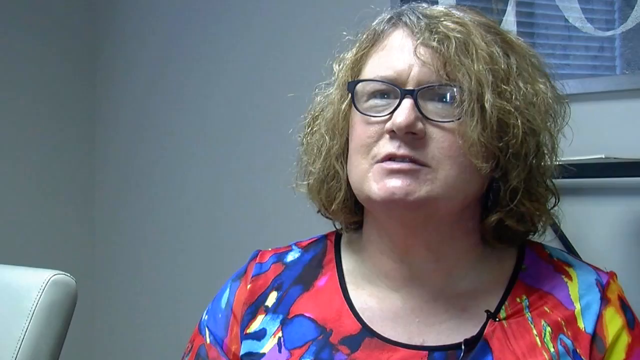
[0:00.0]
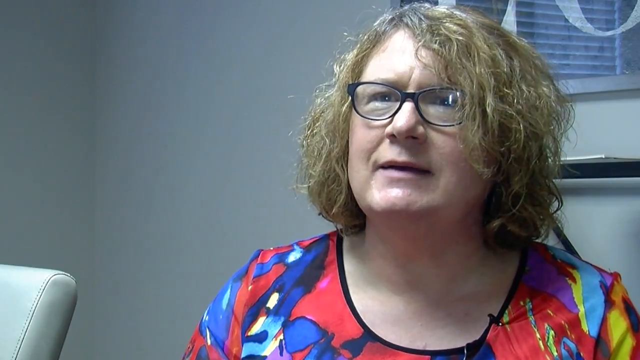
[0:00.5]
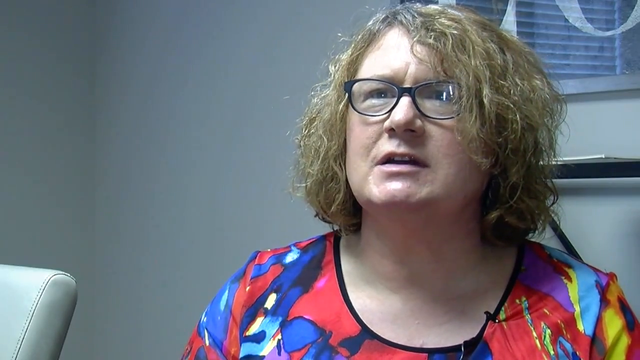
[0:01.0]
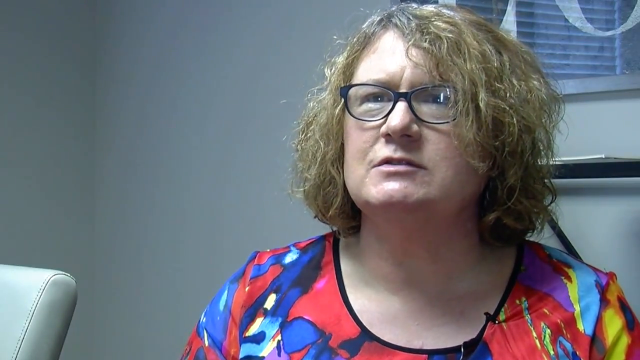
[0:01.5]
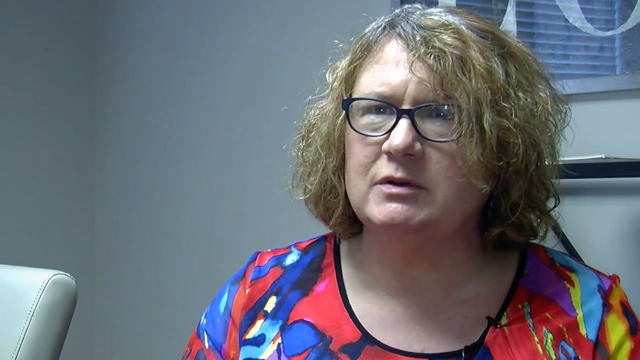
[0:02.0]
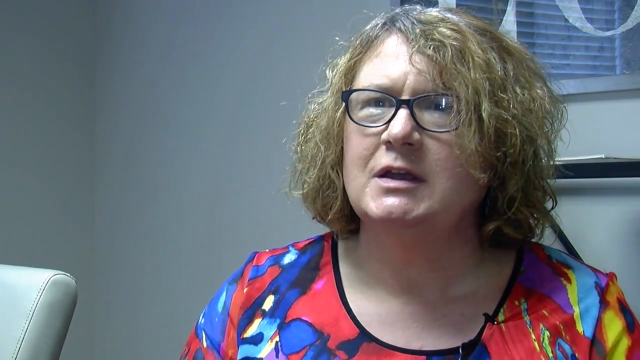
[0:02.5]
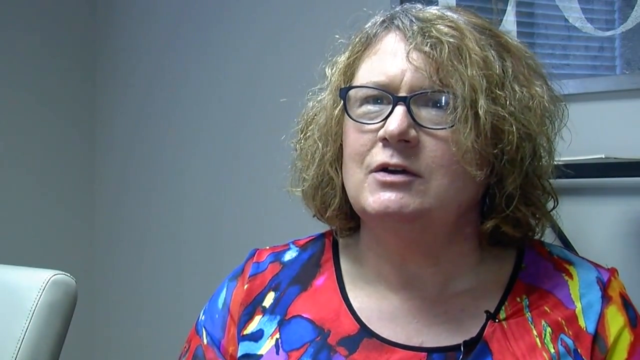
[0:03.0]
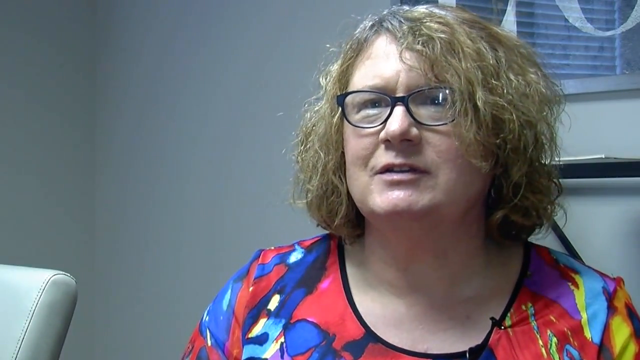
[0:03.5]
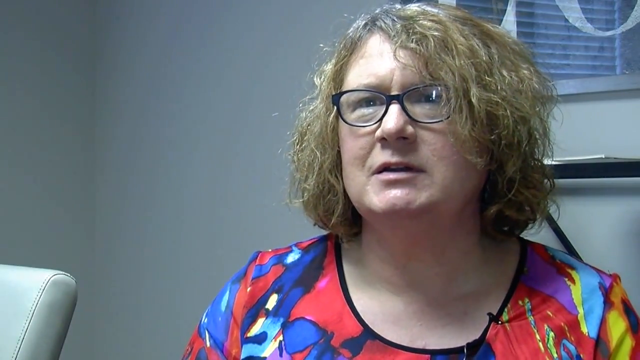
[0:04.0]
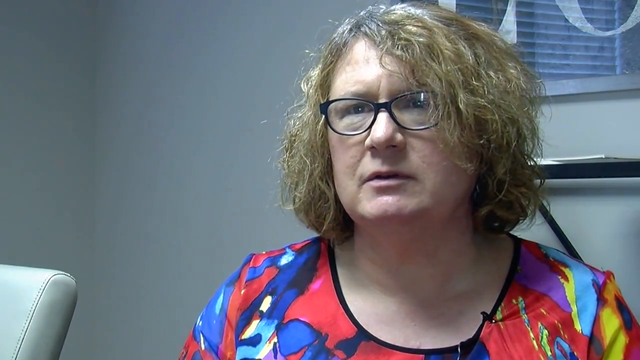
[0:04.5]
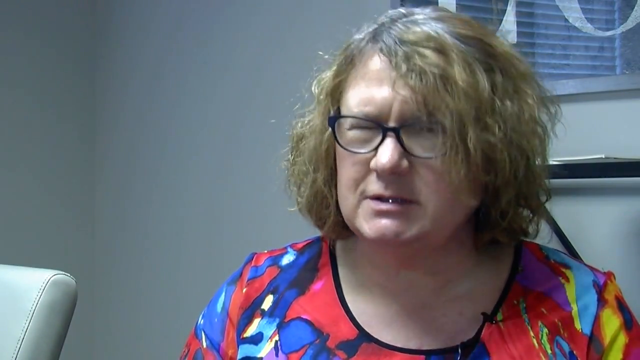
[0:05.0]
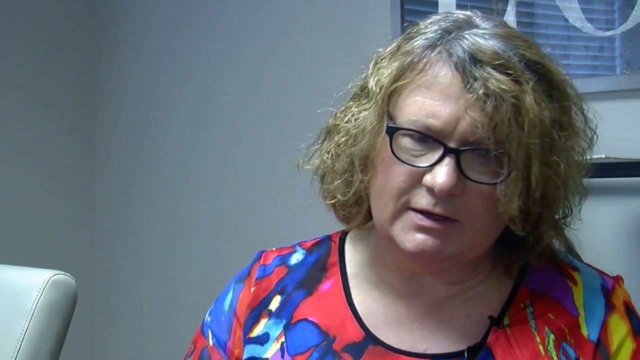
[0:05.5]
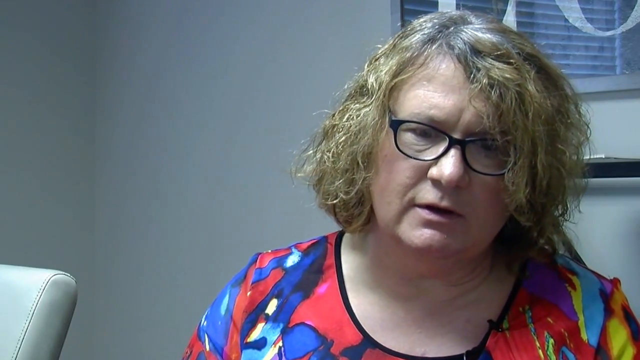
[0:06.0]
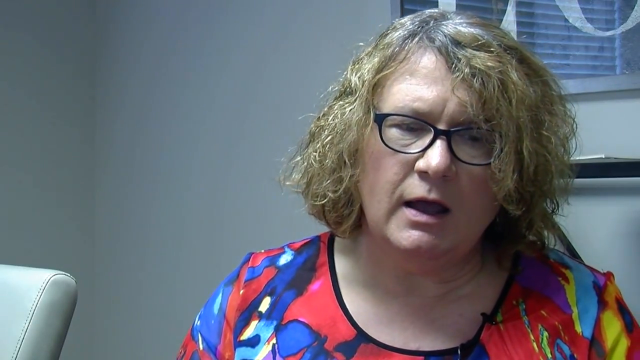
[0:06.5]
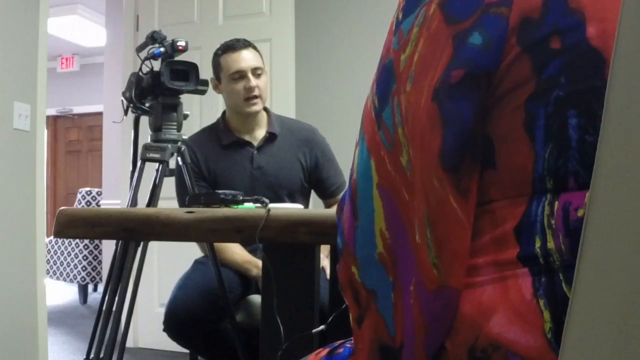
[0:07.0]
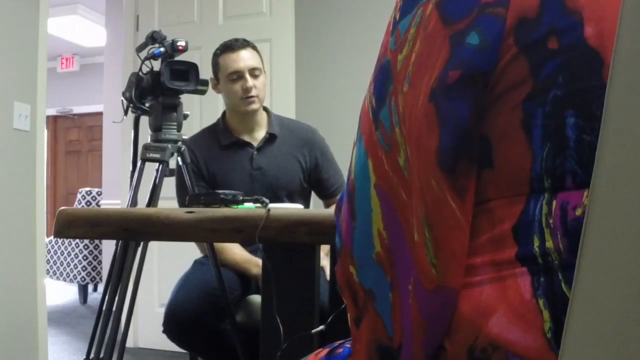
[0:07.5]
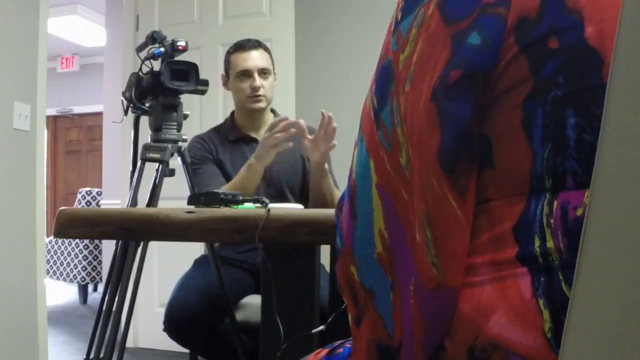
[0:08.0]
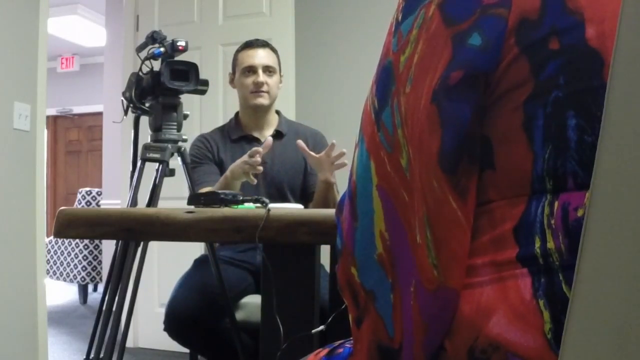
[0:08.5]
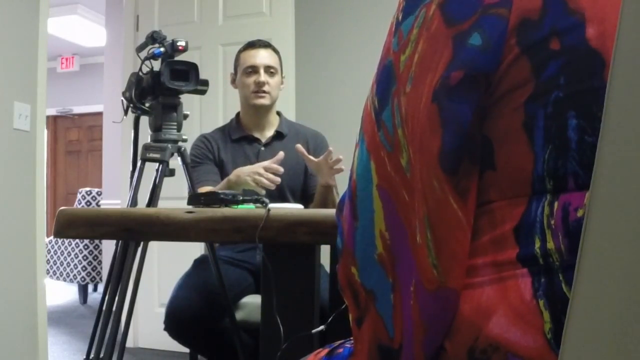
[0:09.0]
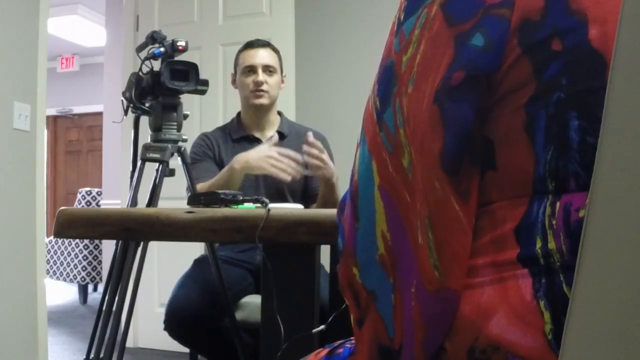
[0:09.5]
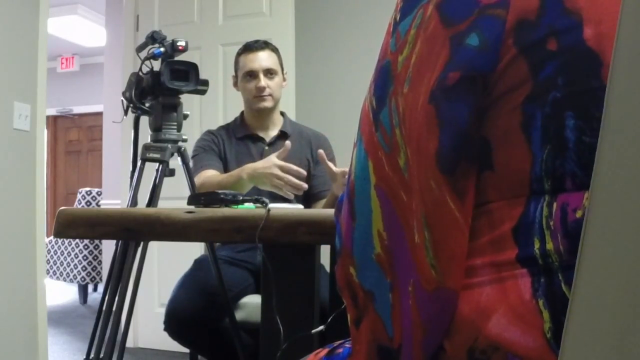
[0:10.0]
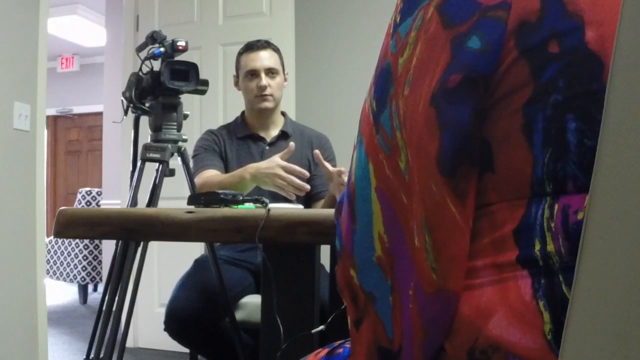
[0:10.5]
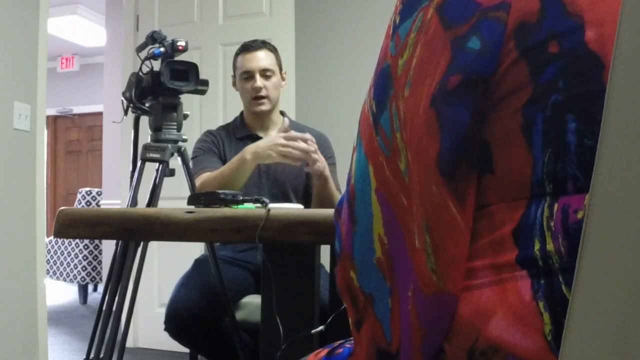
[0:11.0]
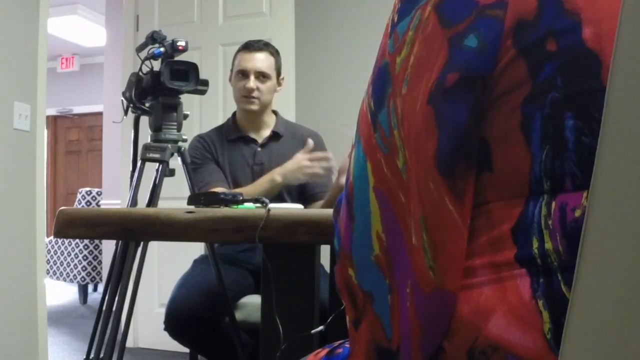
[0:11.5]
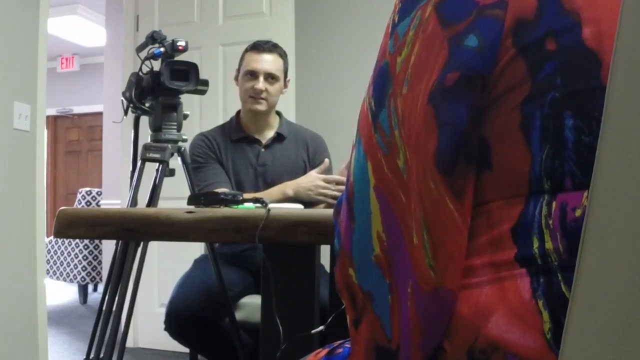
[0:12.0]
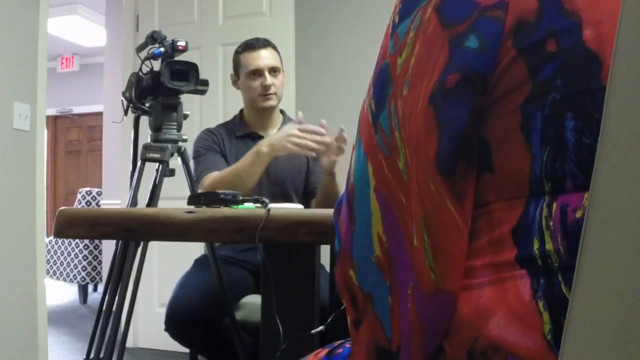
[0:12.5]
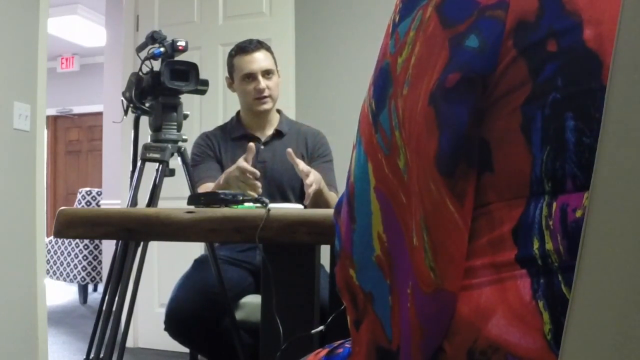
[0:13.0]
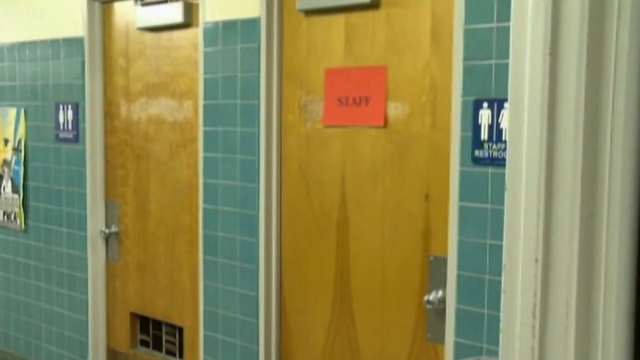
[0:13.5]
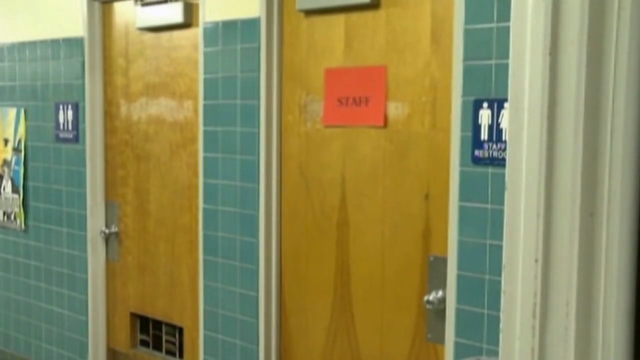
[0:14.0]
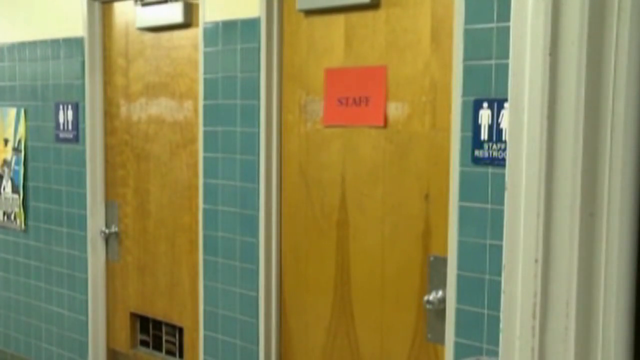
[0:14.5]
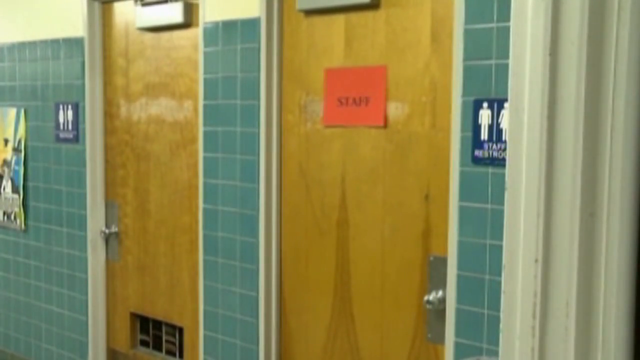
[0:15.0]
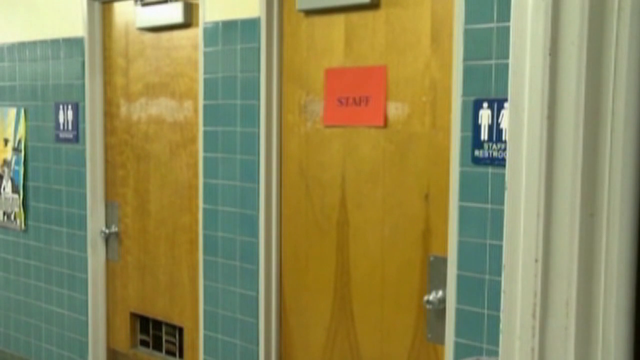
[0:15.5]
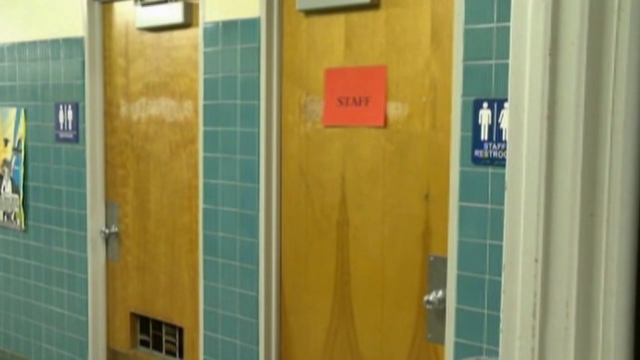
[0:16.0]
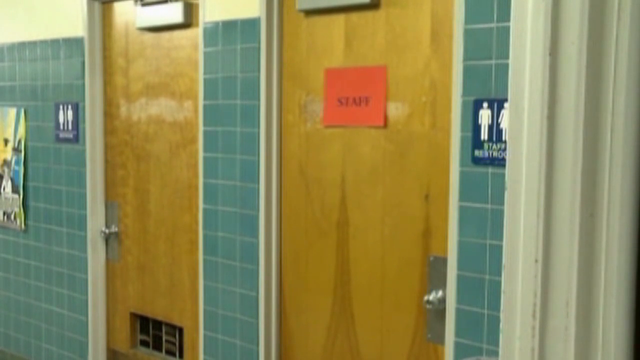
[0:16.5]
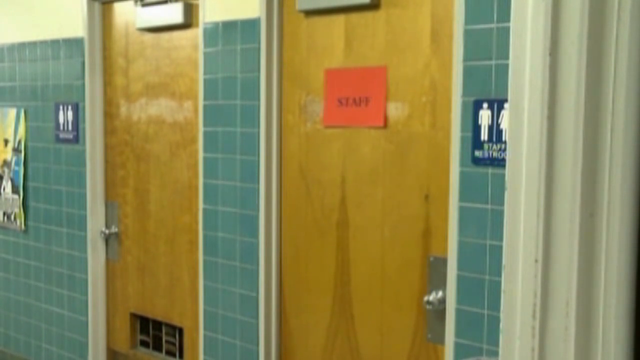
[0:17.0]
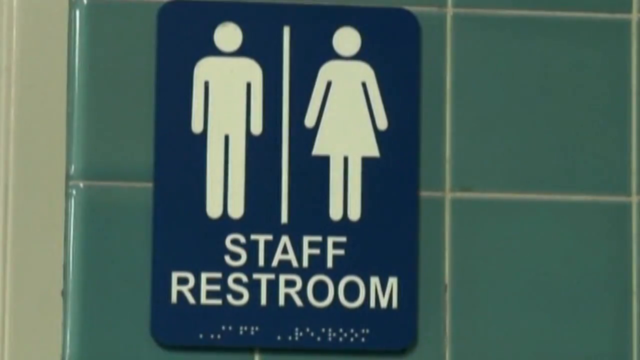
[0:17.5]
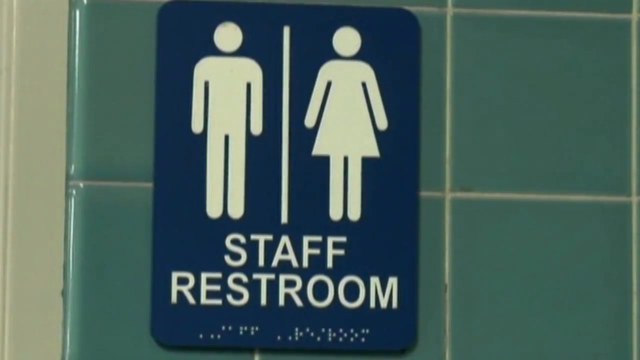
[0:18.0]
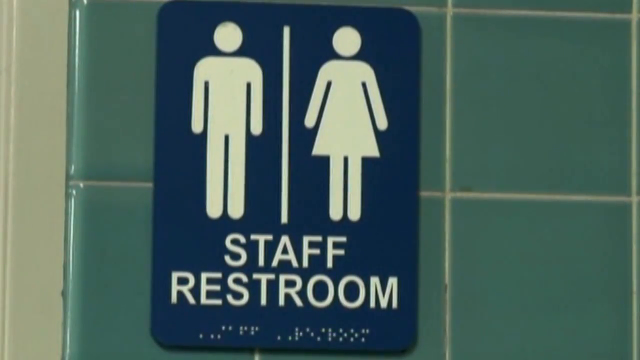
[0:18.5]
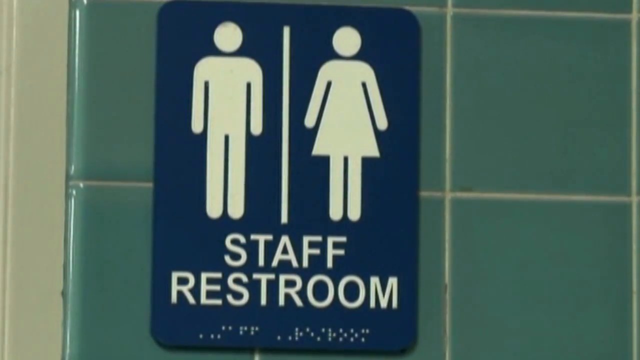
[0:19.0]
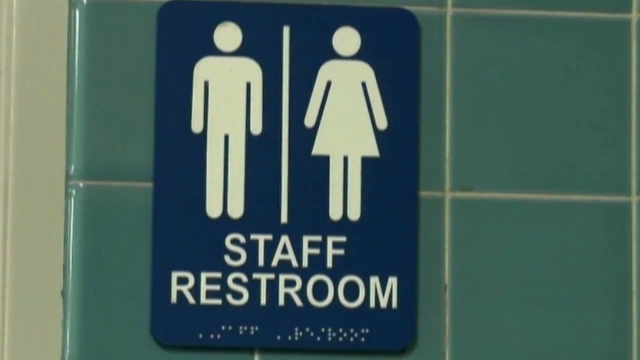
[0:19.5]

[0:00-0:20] A woman speaks to the camera. She has curly, kind of messy, short blonde hair with gray roots, is an older woman in her 40s or 50s, wears black-framed glasses, and is a bit on the larger side. She has on a very colorful top or outfit patterned with blues, reds and yellows. She speaks to the camera and looks down. The camera then cuts to a position behind her, where she is mostly out of frame and only her colorful red, blue, yellow and purple dress is visible. On the other side of a barrier, a man talks to her, moving his hands around as he interviews her, and there is a camera on a tripod behind him. The video then cuts to what looks like a high school bathroom: two brown doors on a blue tiled wall, with blue bathroom signs on the left and right, and an orange paper sign on the right door. The camera cuts to a close-up of the bathroom sign on the blue tiled wall. It is a dark blue sign with white silhouettes of a man on the left and a woman on the right; underneath it says "staff restroom," with braille below that.